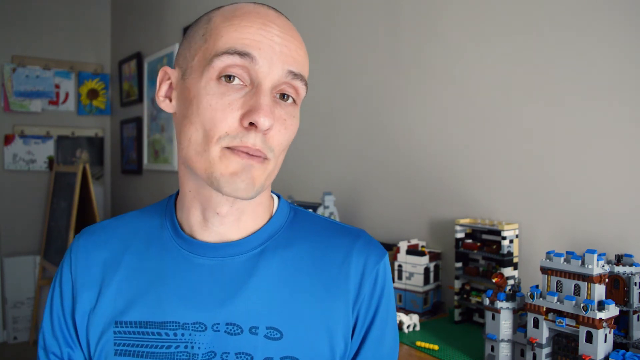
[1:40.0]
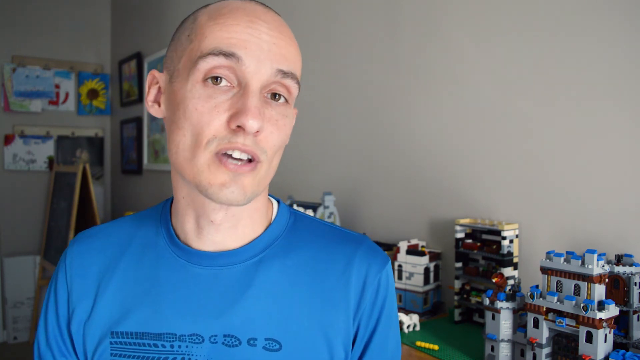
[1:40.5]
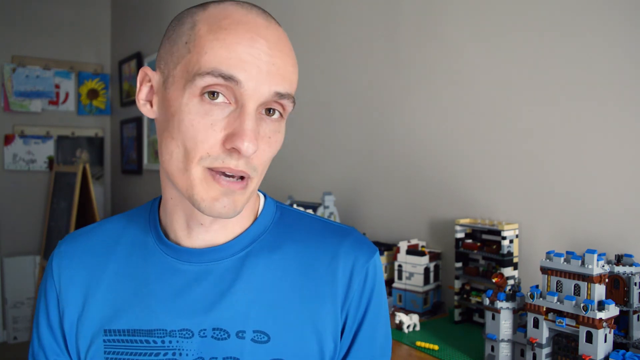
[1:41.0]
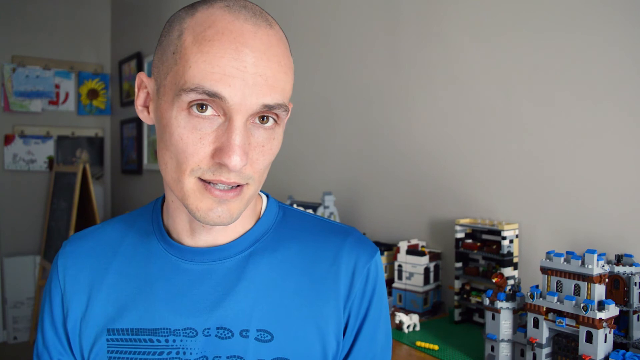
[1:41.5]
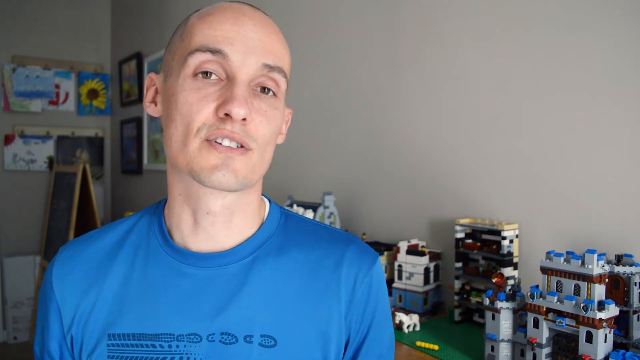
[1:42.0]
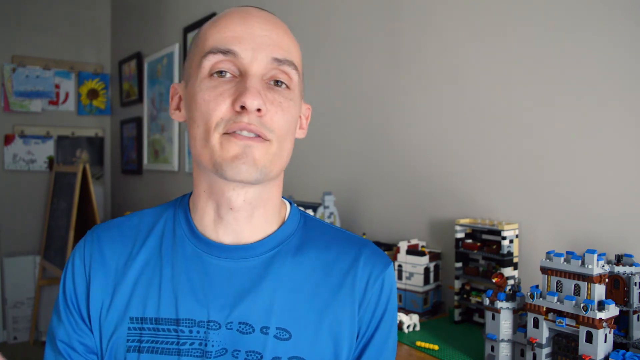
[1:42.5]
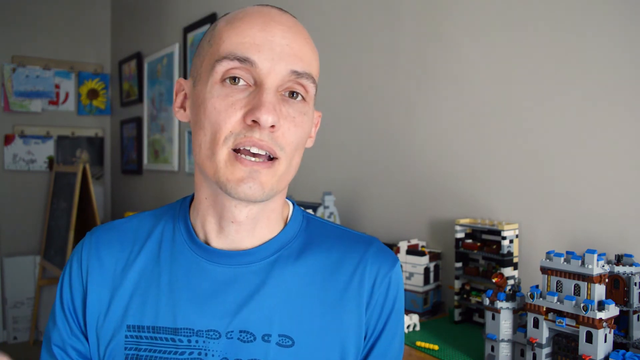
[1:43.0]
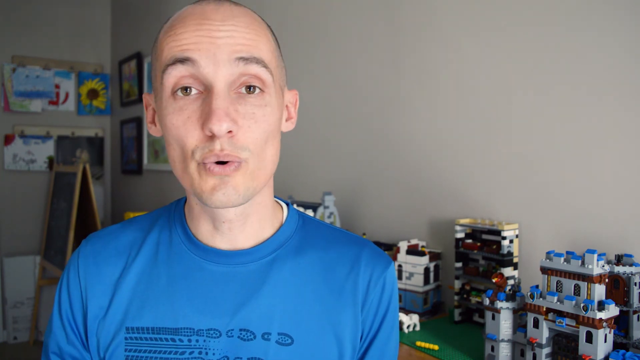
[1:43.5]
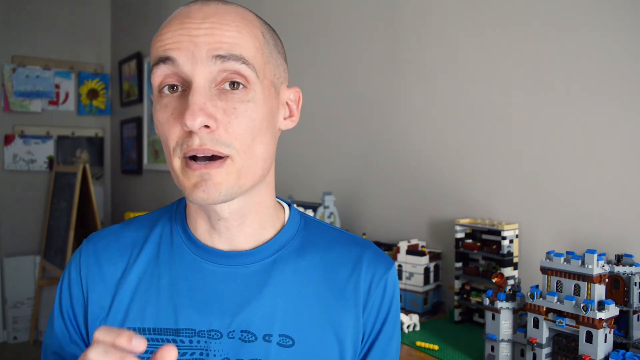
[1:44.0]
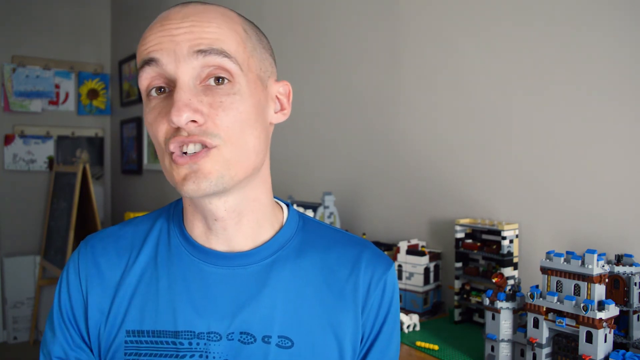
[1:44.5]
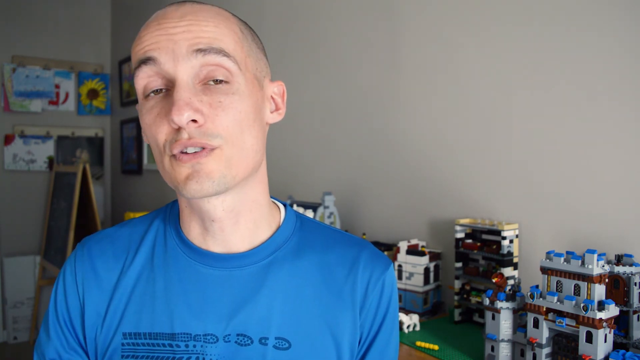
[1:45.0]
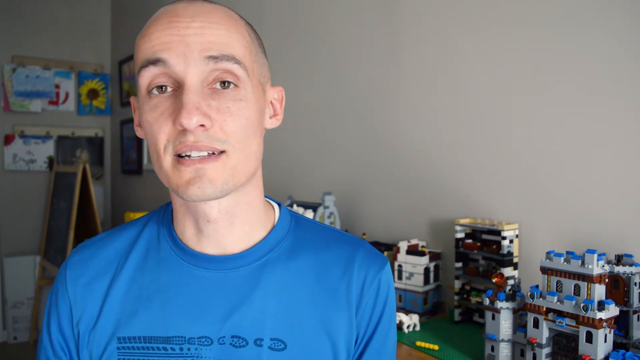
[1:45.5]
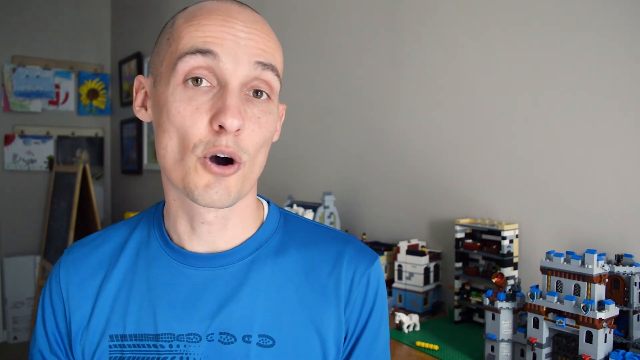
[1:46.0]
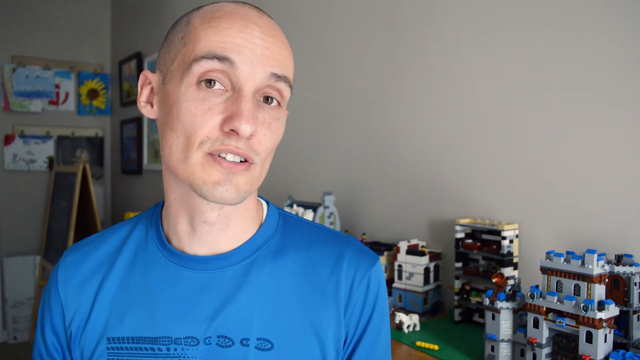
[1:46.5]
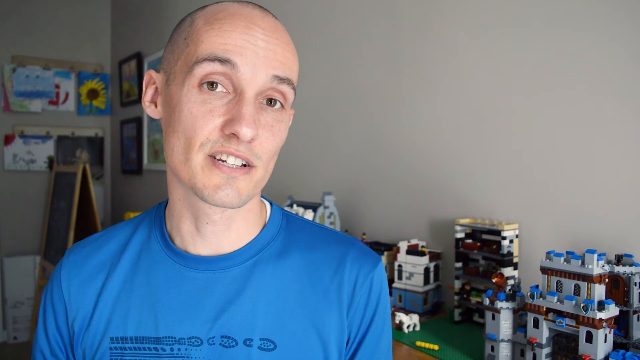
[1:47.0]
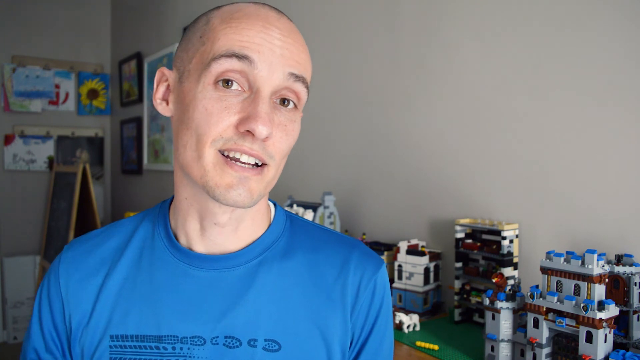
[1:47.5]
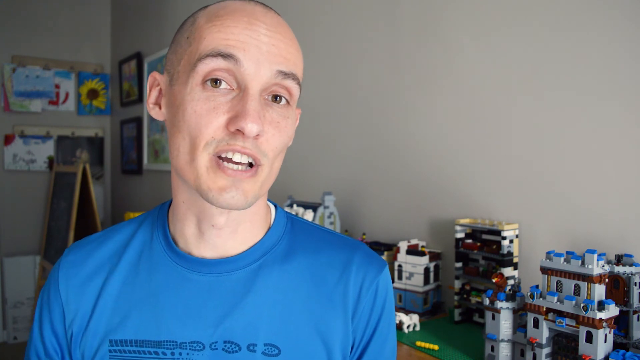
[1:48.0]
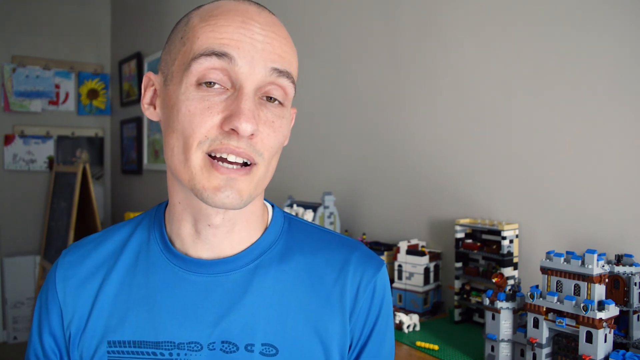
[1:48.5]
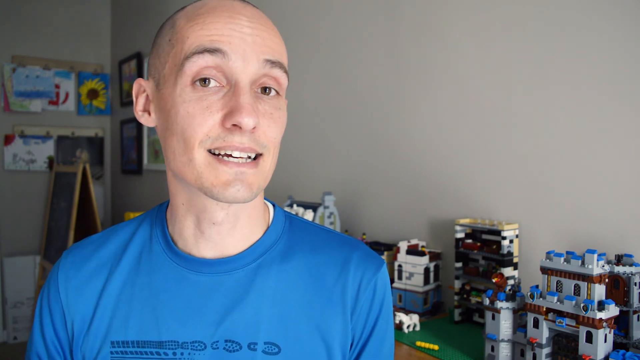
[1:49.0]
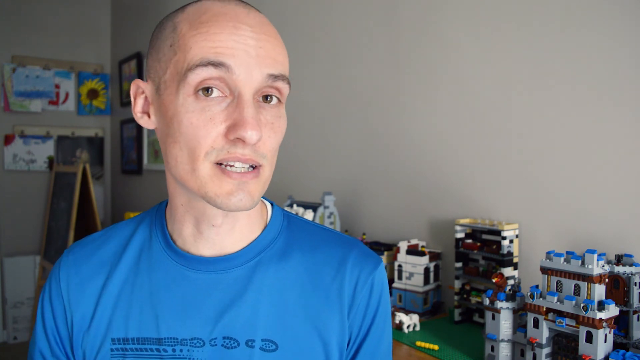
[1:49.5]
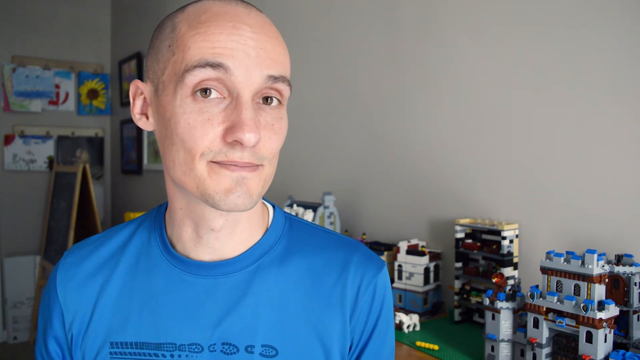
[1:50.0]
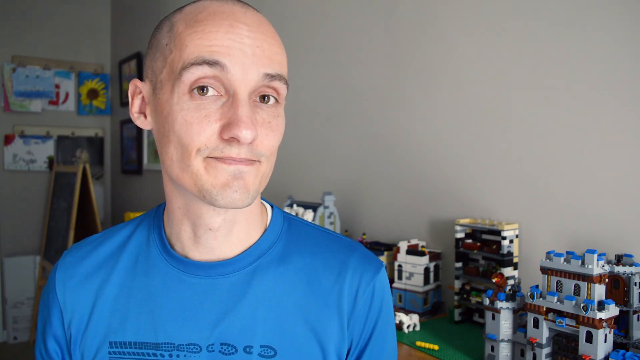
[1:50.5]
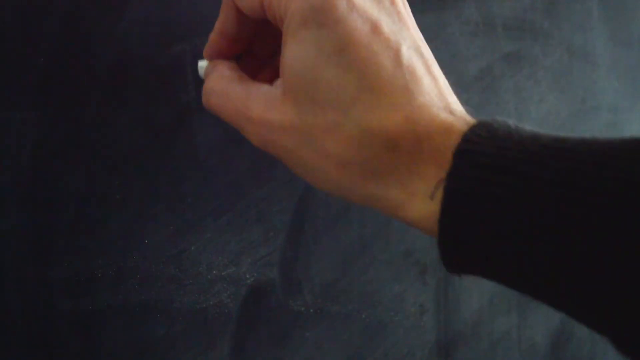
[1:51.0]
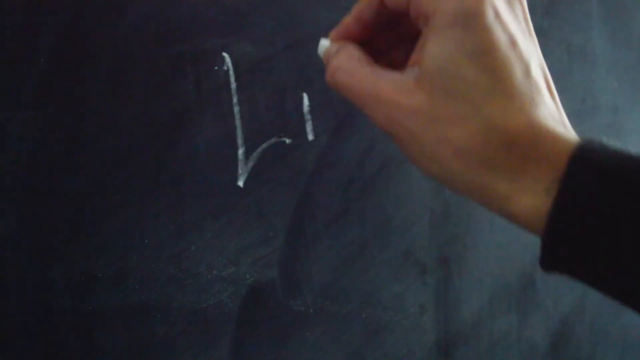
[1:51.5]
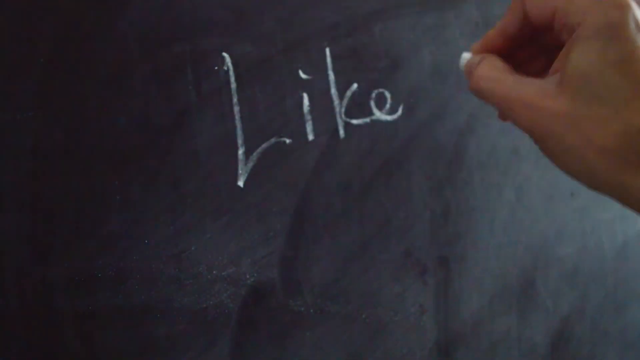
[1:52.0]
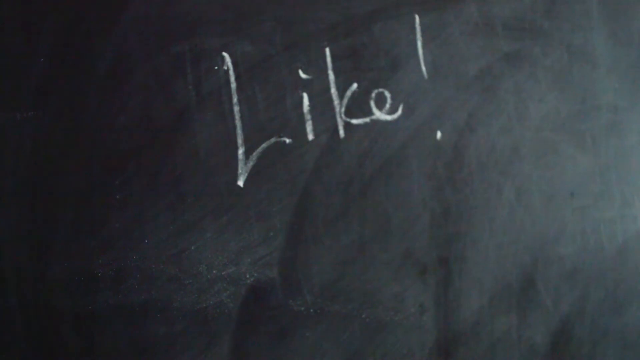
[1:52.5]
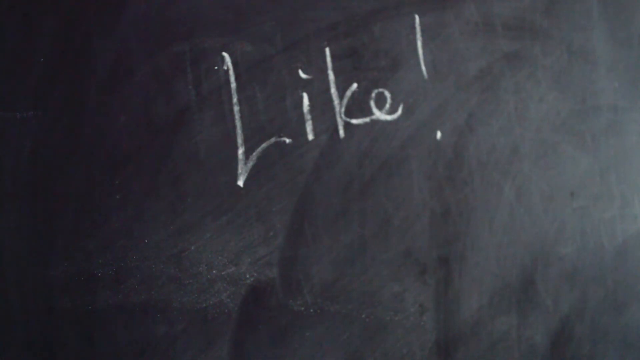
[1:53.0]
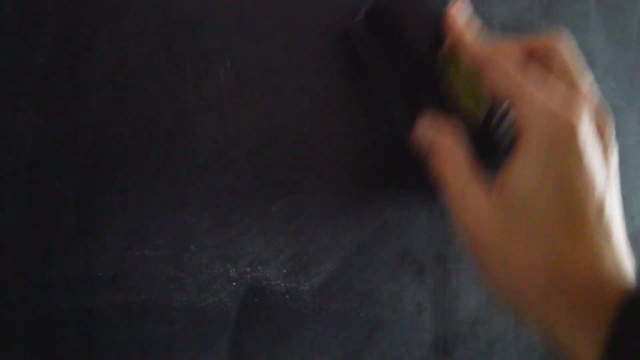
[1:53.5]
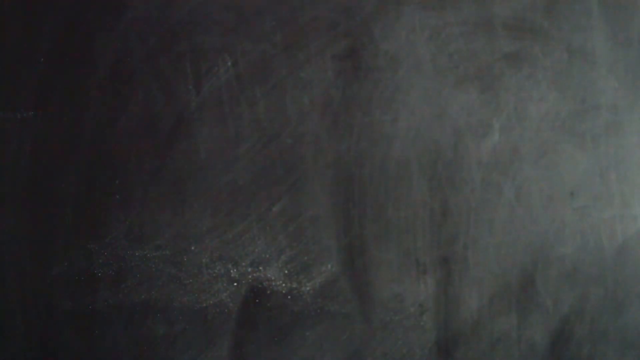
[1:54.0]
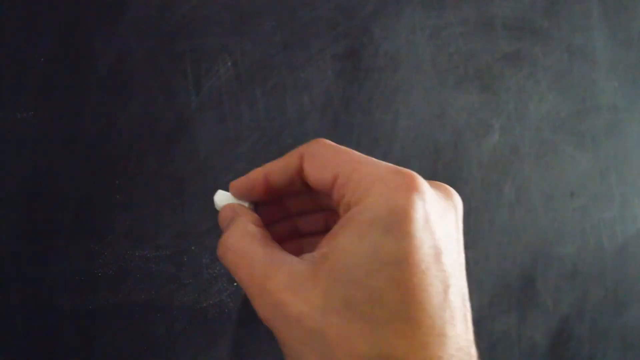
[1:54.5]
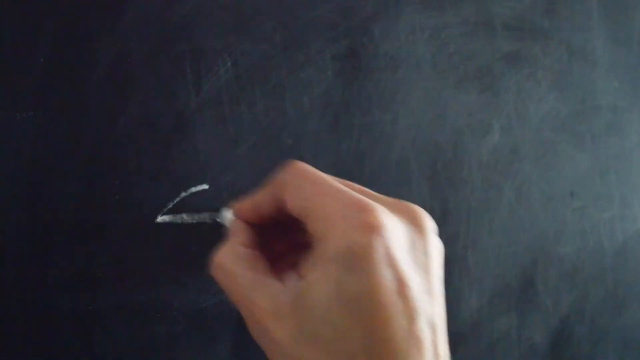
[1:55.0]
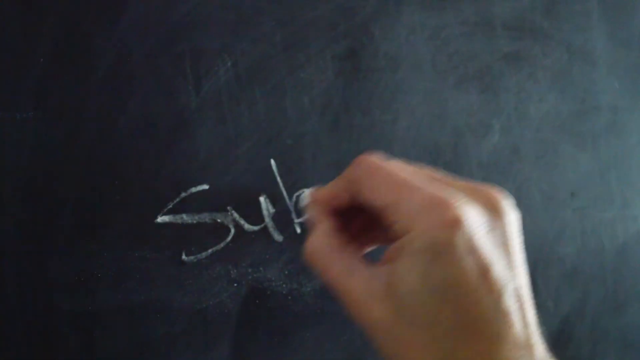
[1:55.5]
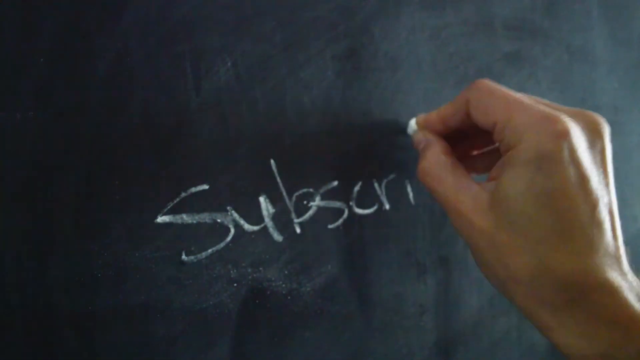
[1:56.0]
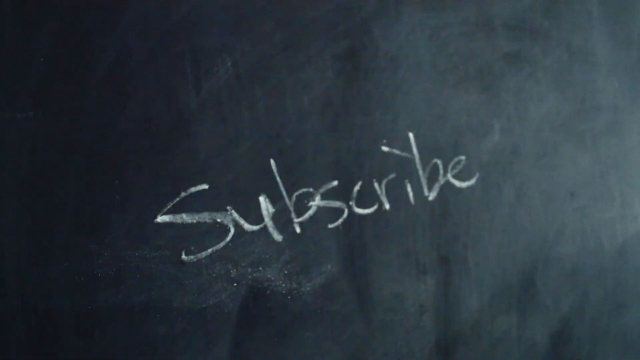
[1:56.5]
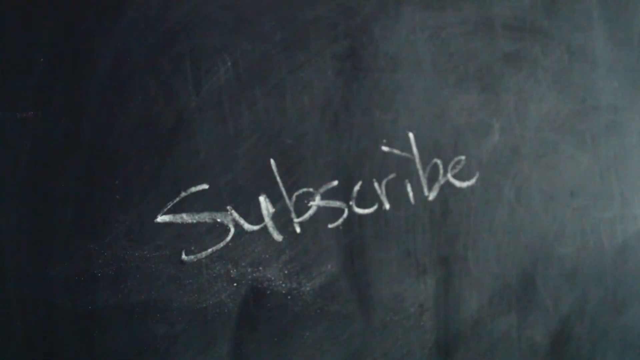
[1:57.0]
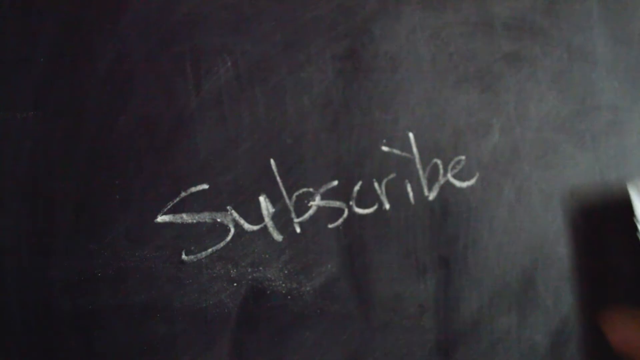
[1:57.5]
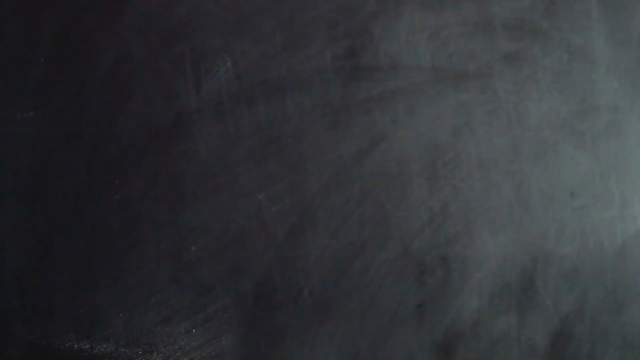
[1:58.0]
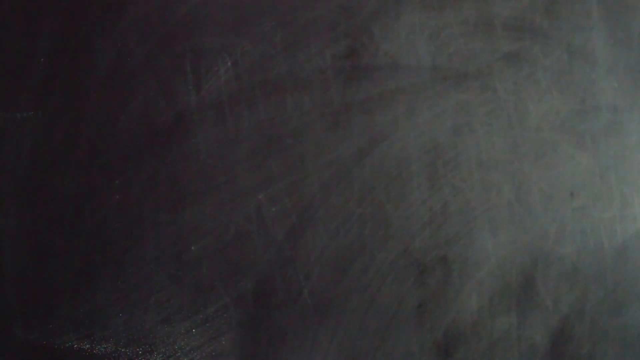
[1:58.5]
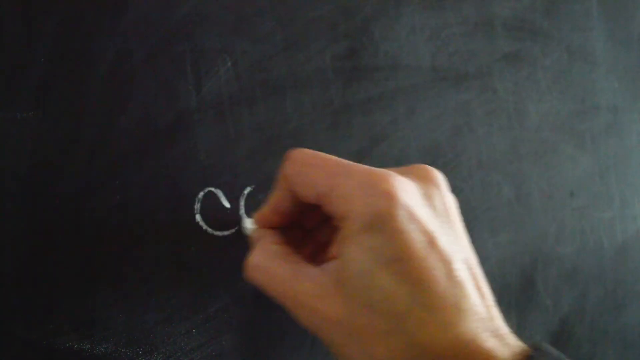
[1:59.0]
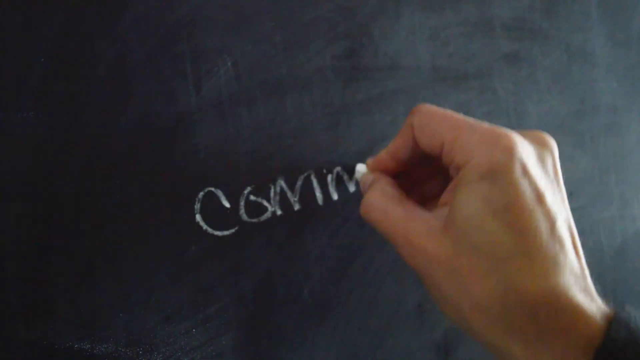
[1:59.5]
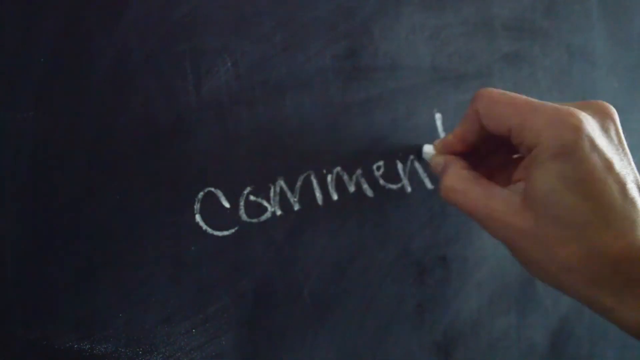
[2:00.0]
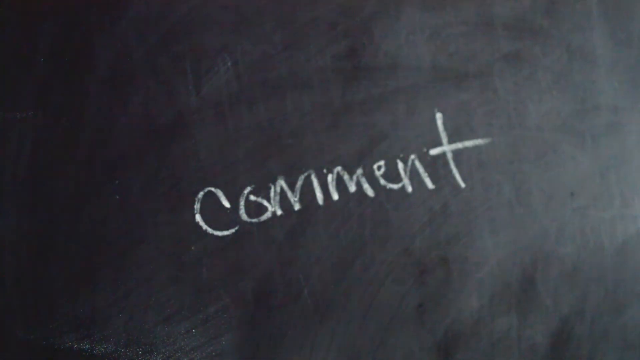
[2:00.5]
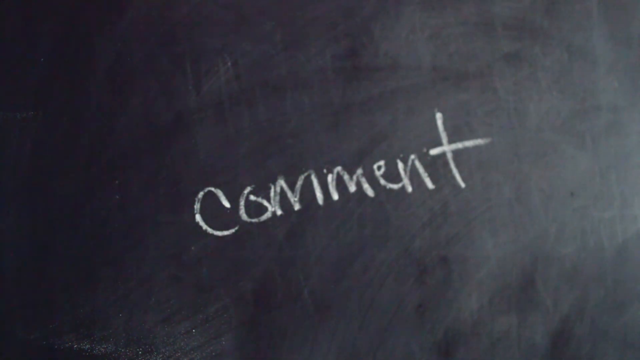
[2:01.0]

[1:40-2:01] The man in the blue shirt continues explaining. After a few seconds, a hand is seen writing "Like!" on a blackboard; the writing is wiped off, then "subscribe" is written and also wiped off, and then "comment" can be seen. This is apparently a call to action for viewers. After the writing, the man in the blue shirt is seen again continuing to explain. The background is unchanged: a few pictures hang on the wall on the left, and house-like structures made of Legos are on the table on the right. The video ends with the man's head bent slightly to the left, and a white vest seems to show underneath his blue shirt.